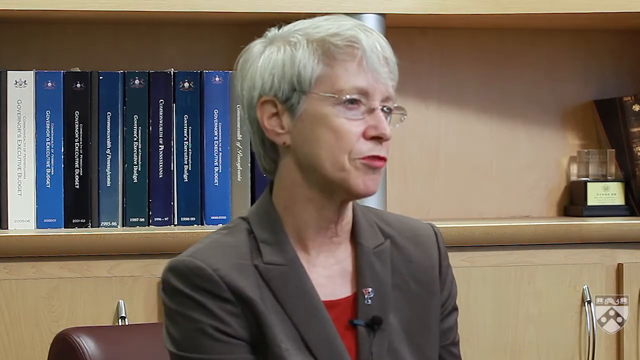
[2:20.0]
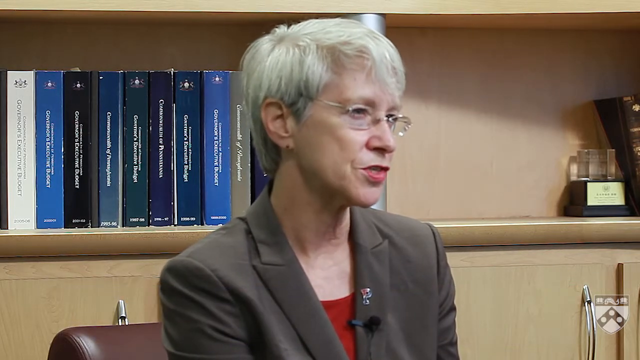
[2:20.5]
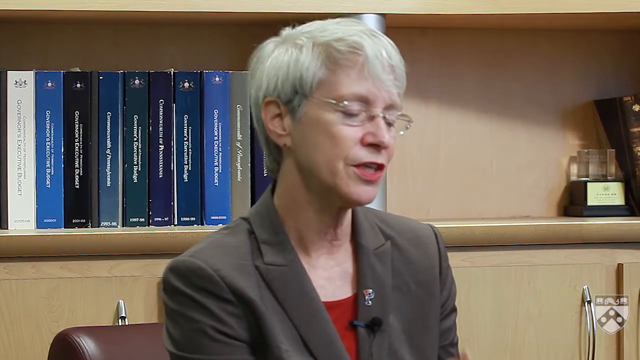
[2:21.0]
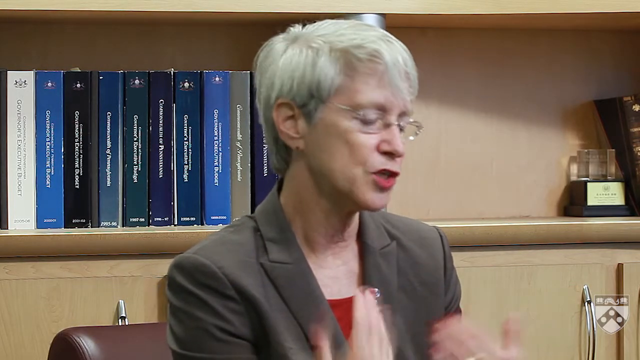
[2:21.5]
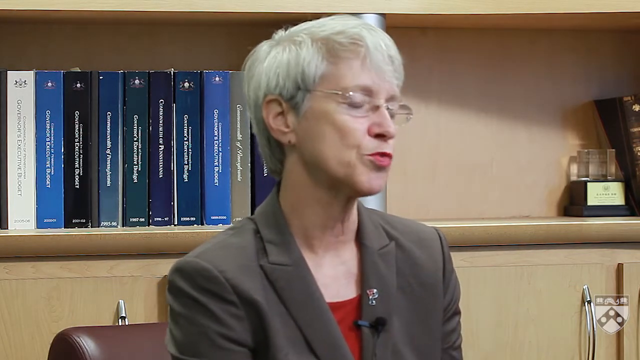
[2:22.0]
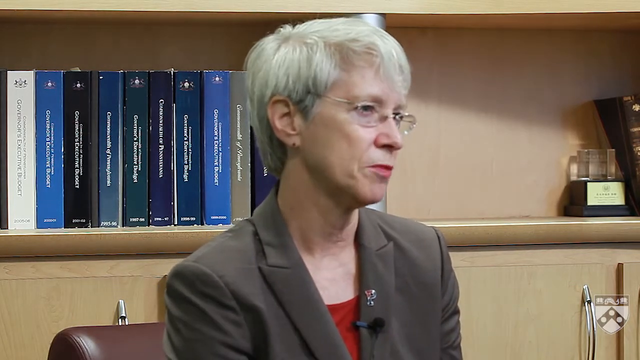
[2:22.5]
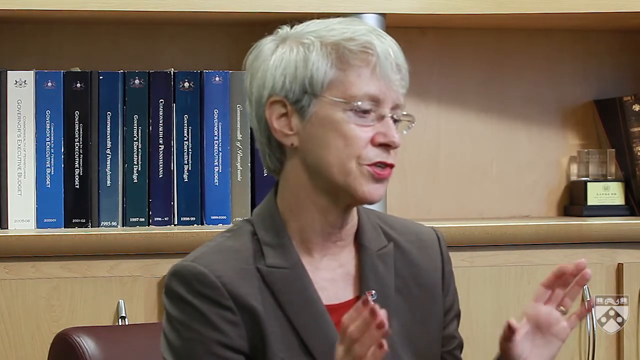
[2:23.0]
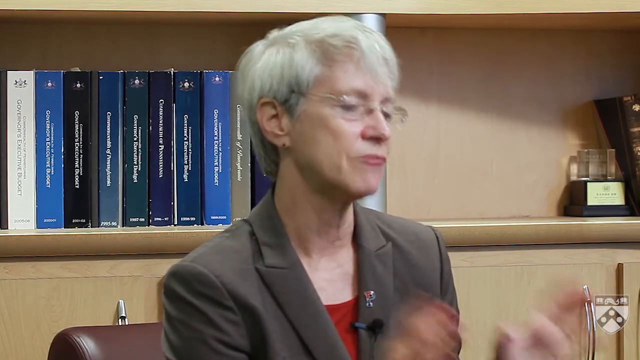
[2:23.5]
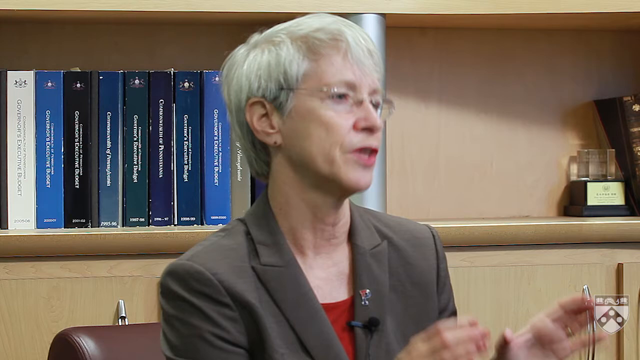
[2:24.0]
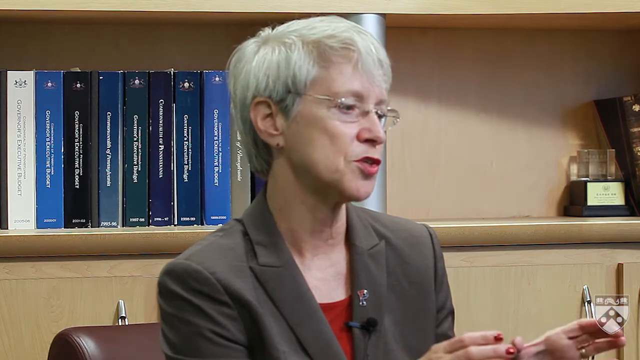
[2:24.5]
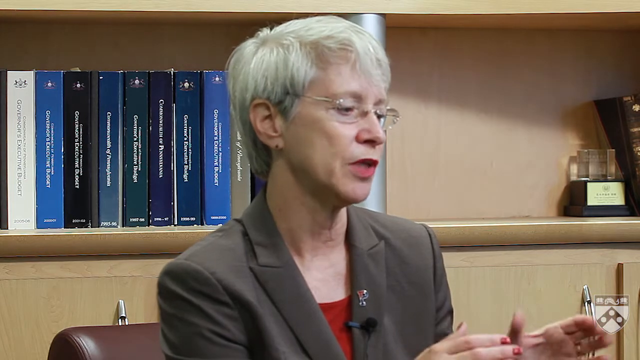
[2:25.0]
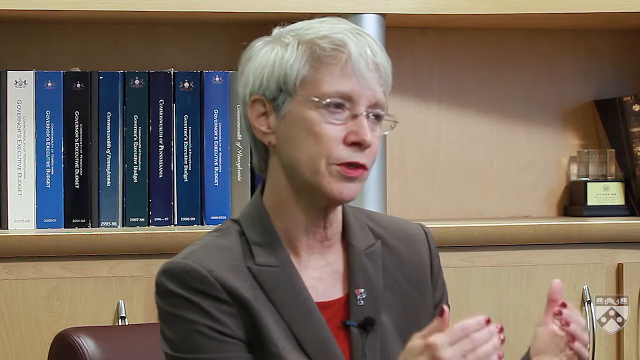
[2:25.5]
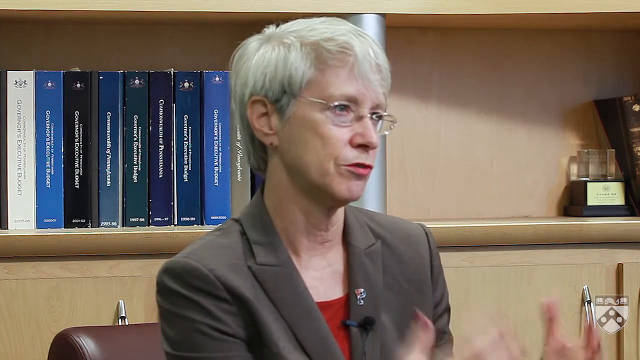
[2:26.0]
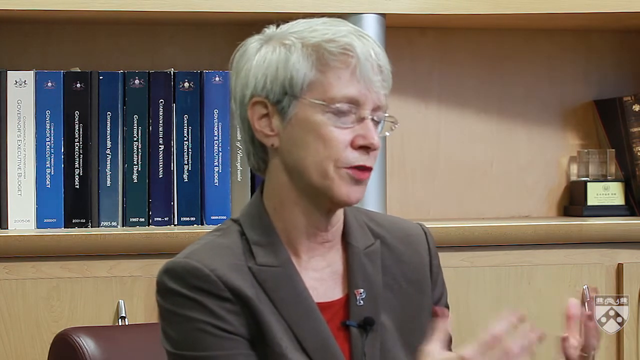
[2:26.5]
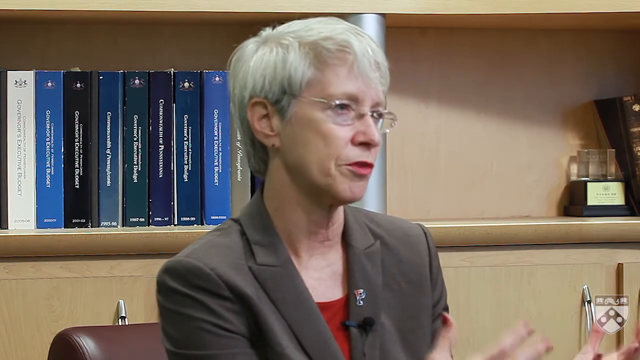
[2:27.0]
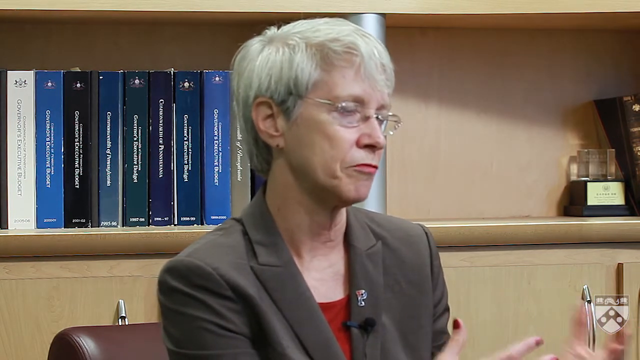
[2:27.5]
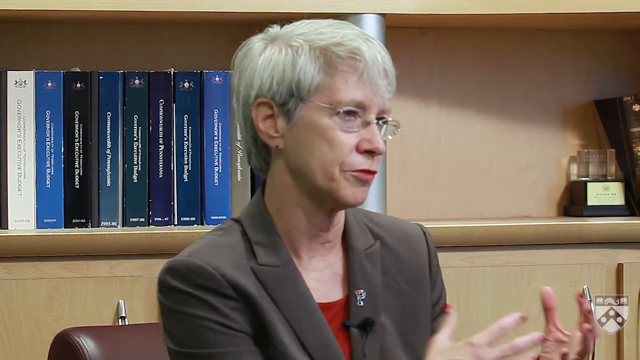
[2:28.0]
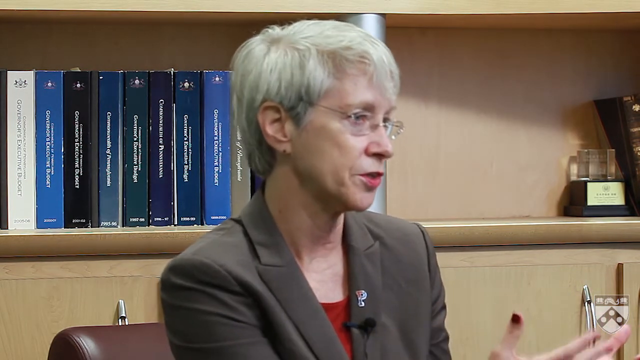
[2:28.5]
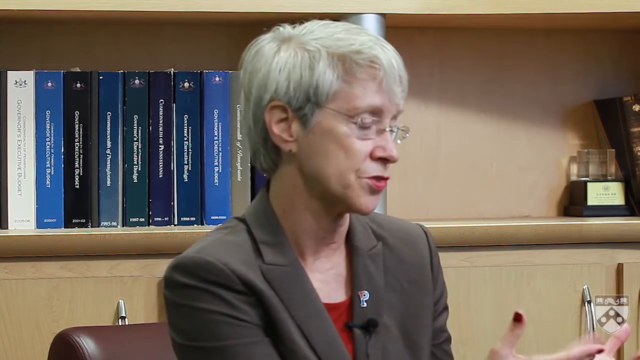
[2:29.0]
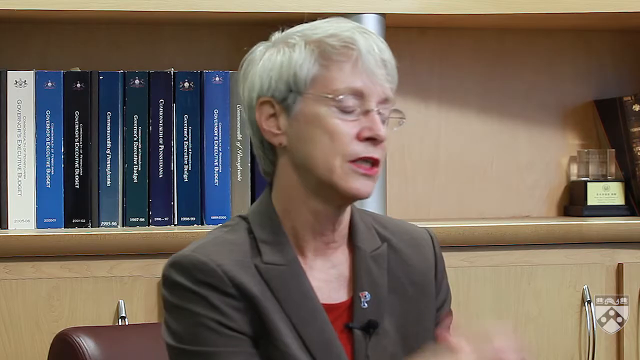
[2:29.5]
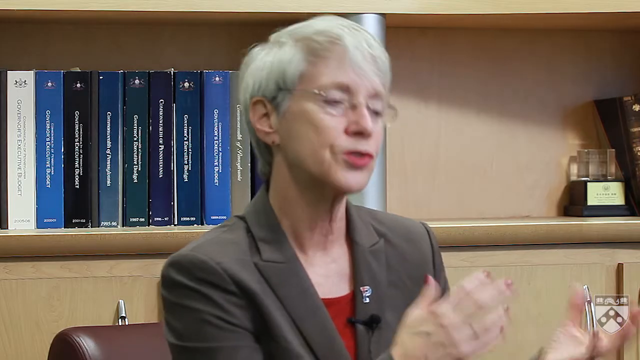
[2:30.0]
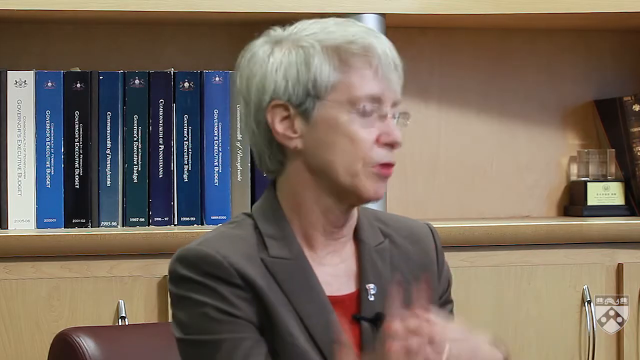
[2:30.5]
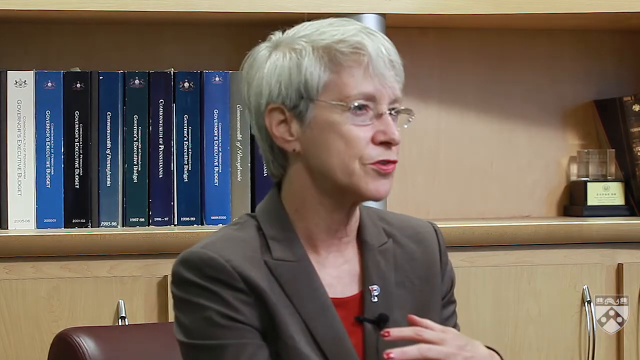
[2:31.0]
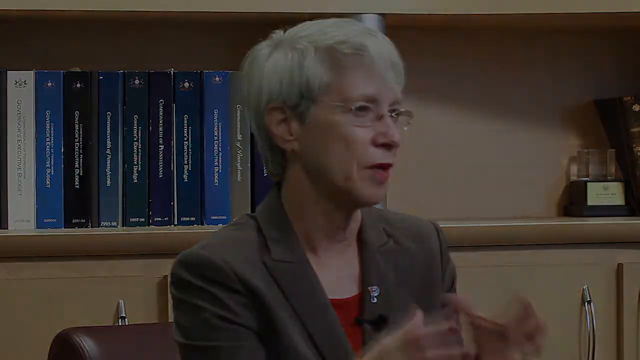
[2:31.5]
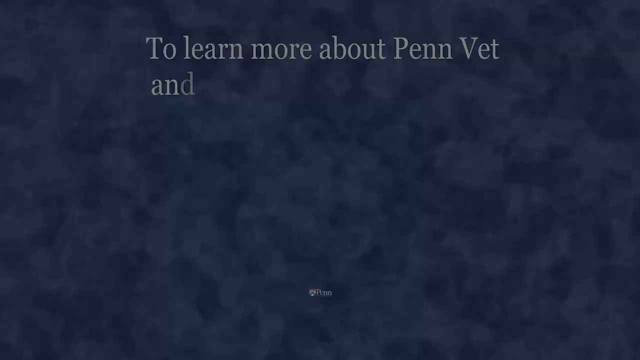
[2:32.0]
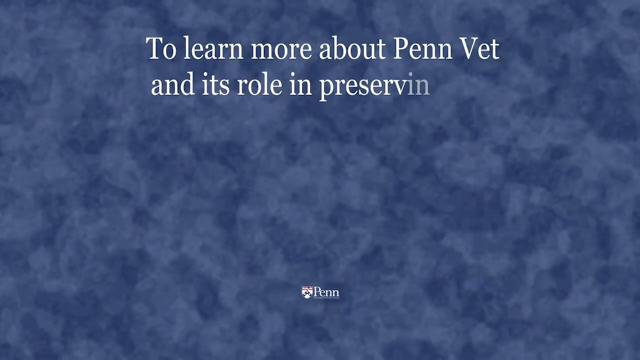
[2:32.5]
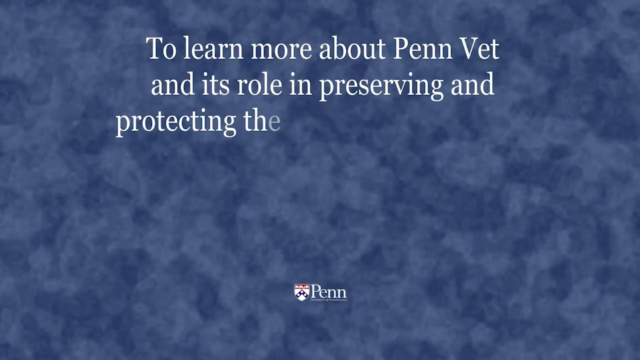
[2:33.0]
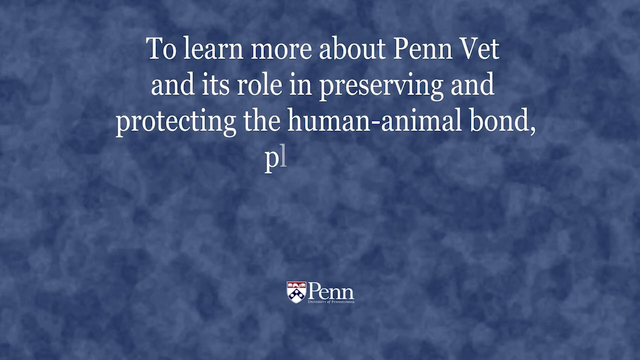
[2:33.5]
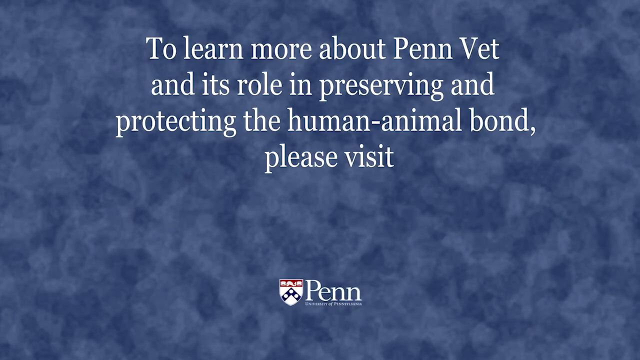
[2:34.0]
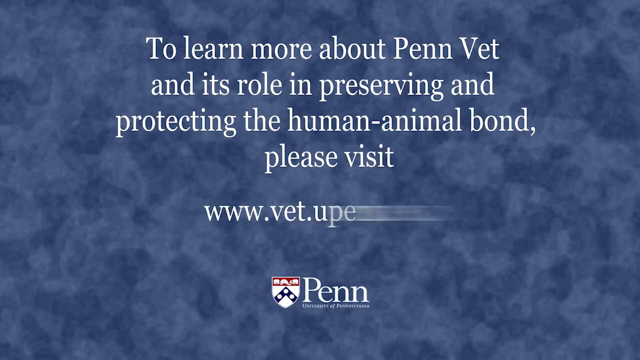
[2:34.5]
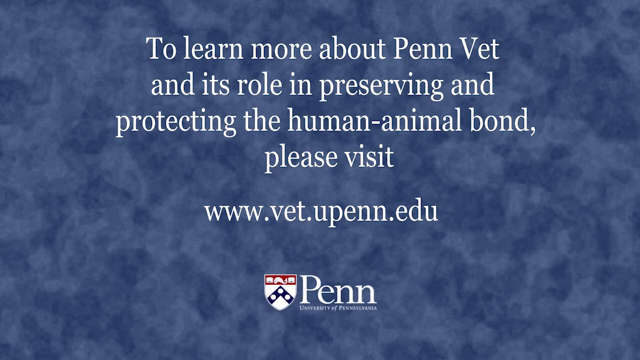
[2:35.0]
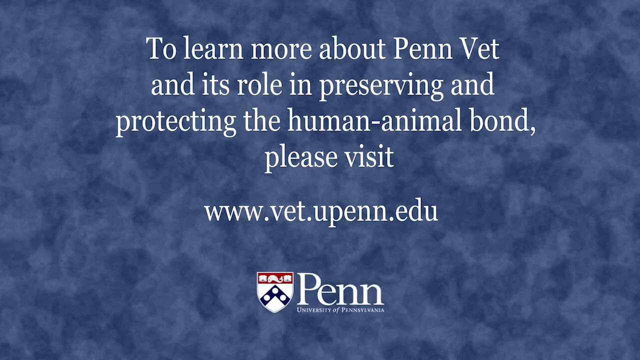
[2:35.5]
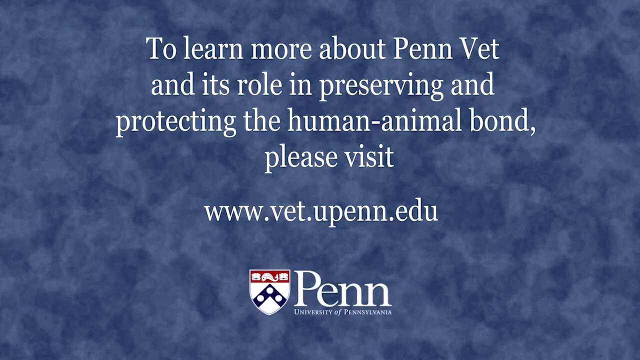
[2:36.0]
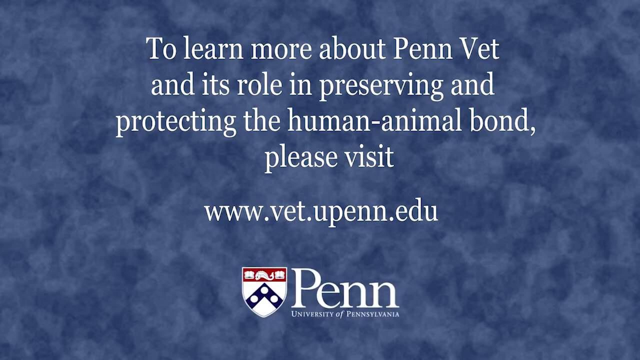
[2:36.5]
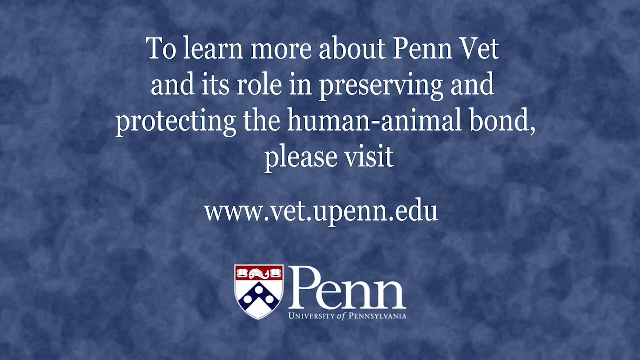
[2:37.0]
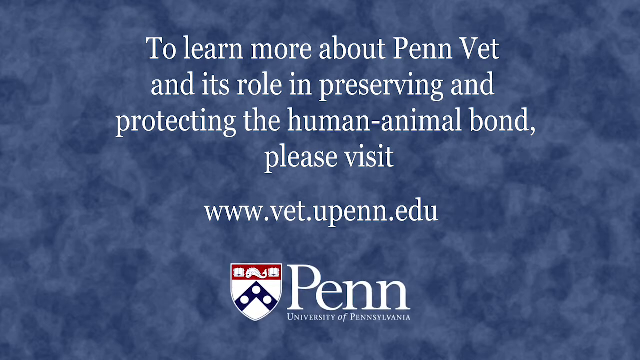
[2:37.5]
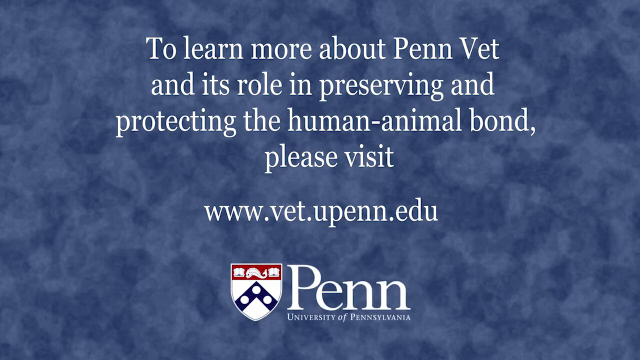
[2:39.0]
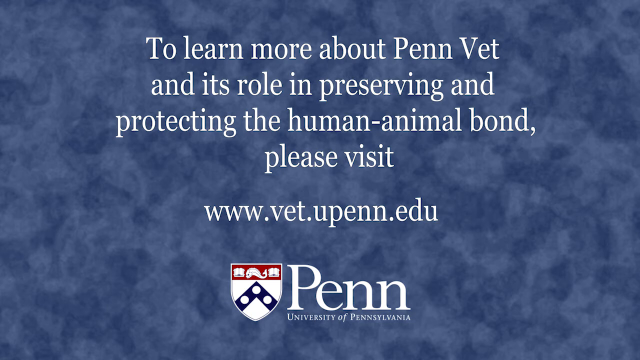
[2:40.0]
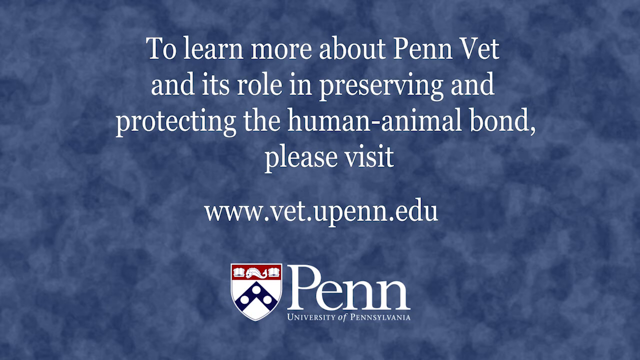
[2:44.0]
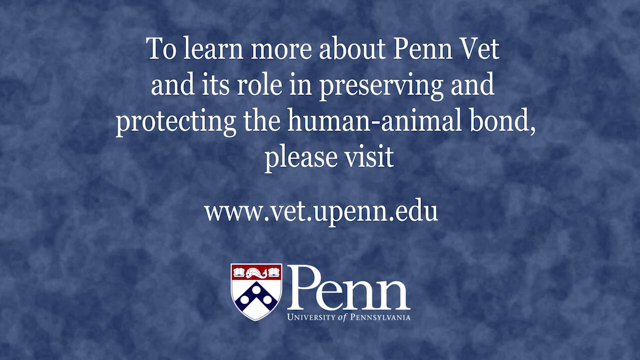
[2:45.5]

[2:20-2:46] A woman is interviewed in an office with books lined up neatly behind her head; they look like they could be older books. She talks while facing more toward the right. She appears to wear a little red lipstick, has wire-rimmed glasses and pierced ears, and her short hair comes down to her ears and a little in the back. She looks like she could be maybe in her 60s. White text on a blue background then reads "to learn more about Penn vet and its role in preserving and protecting the human-animal bond please visit www.vet.upenn.edu," with "Penn University of Pennsylvania" at the bottom. This page stays up for a while.